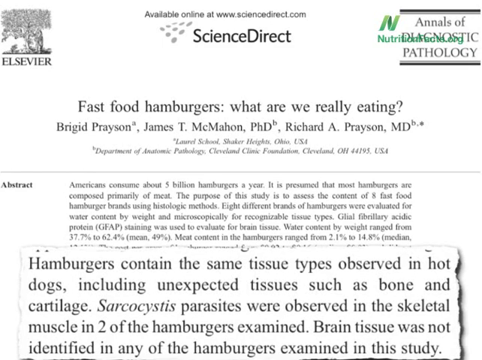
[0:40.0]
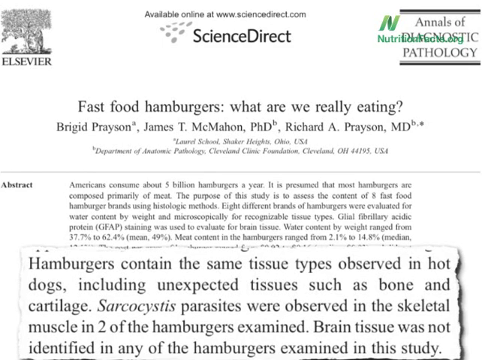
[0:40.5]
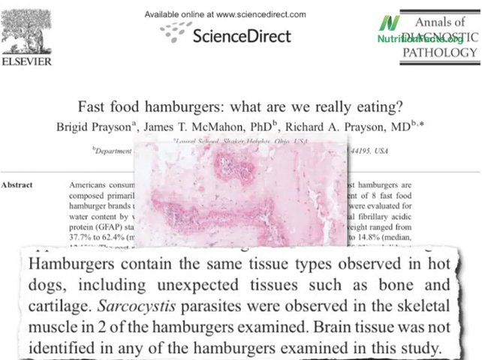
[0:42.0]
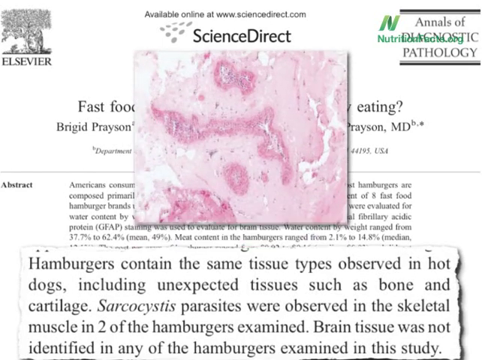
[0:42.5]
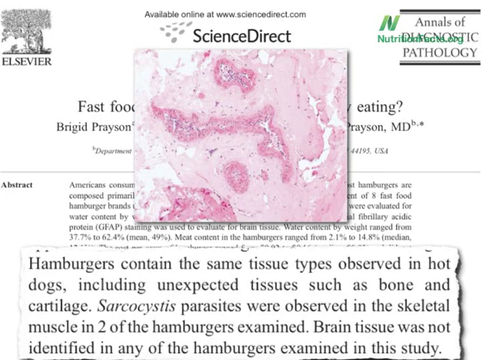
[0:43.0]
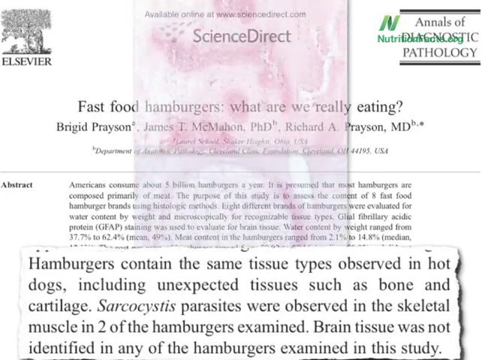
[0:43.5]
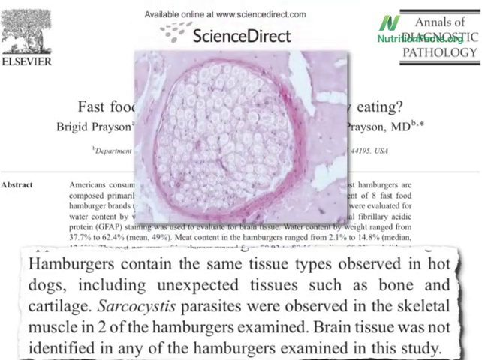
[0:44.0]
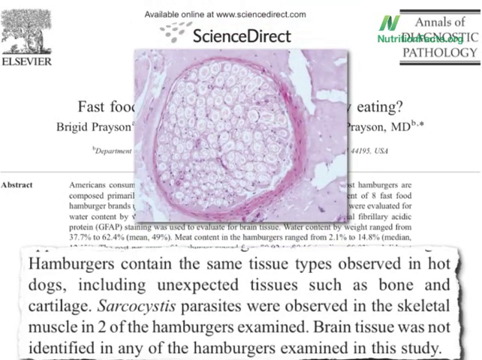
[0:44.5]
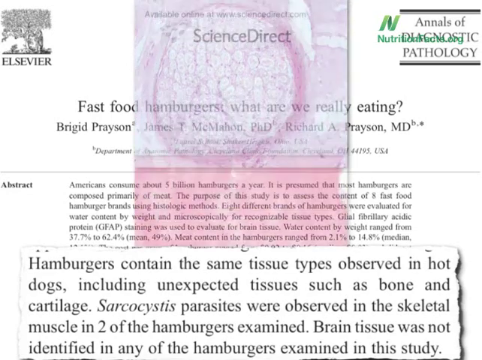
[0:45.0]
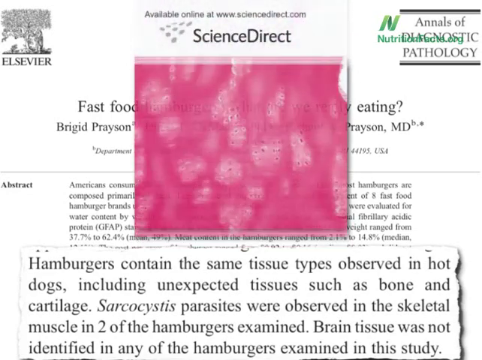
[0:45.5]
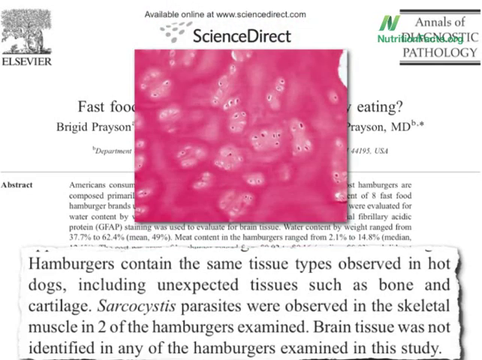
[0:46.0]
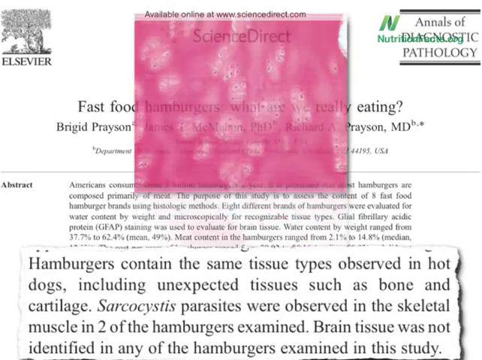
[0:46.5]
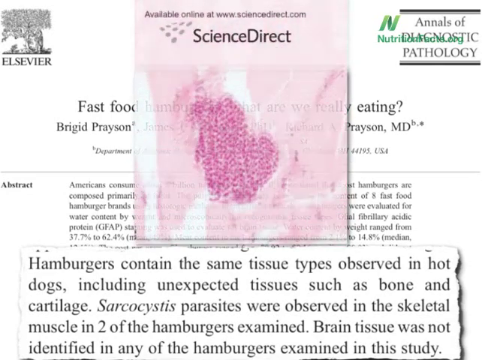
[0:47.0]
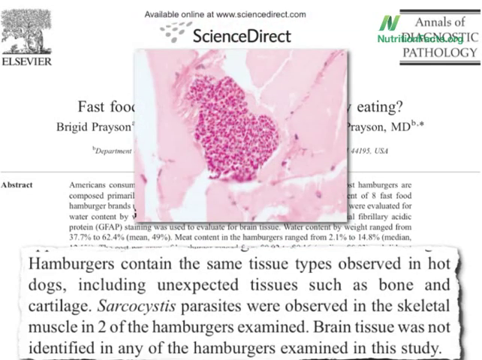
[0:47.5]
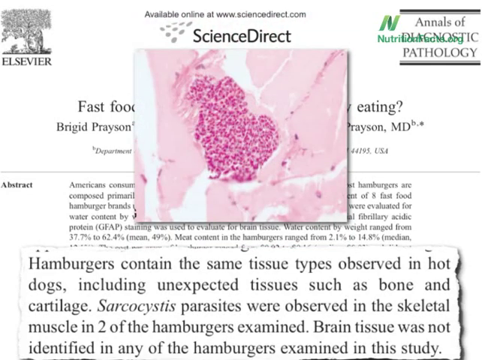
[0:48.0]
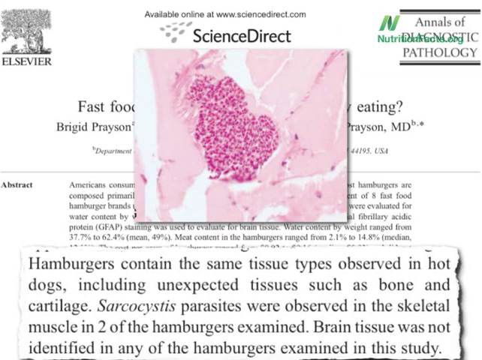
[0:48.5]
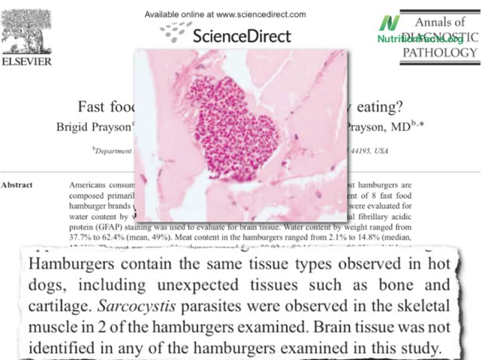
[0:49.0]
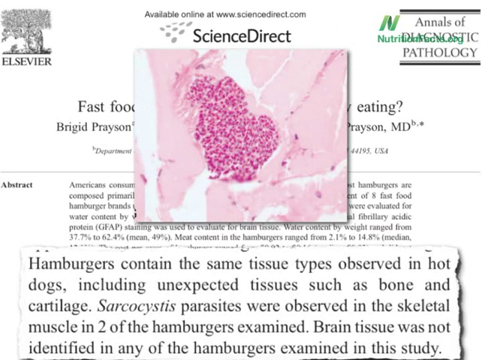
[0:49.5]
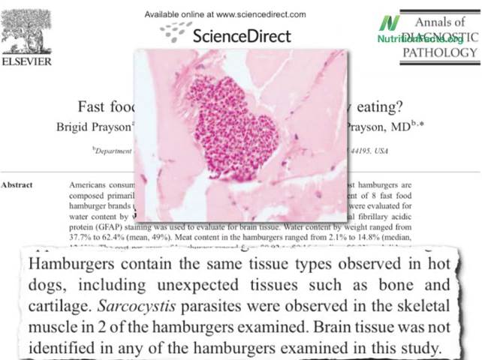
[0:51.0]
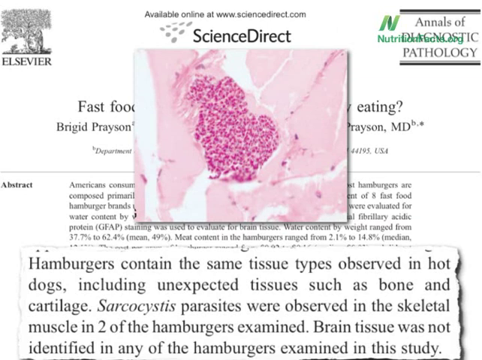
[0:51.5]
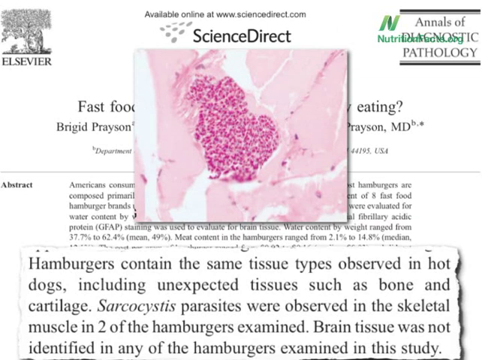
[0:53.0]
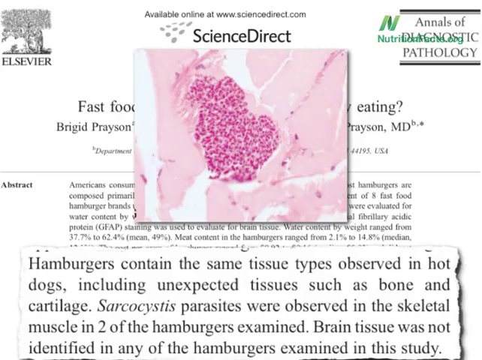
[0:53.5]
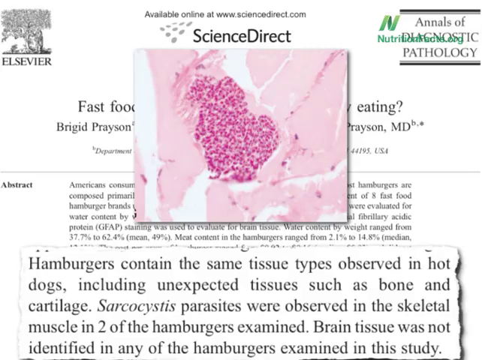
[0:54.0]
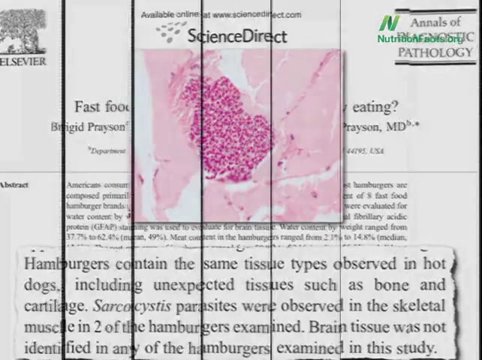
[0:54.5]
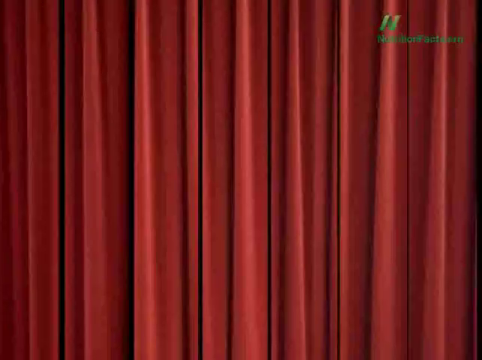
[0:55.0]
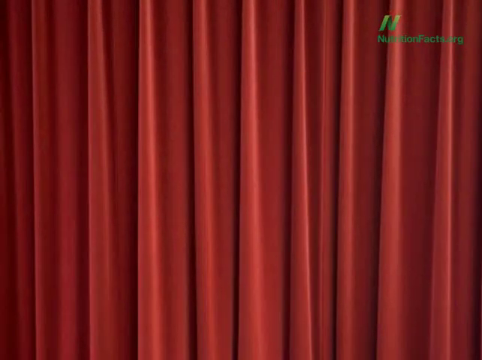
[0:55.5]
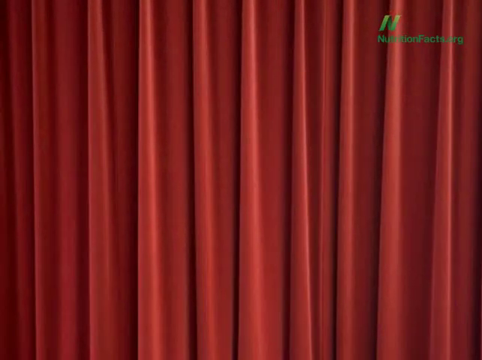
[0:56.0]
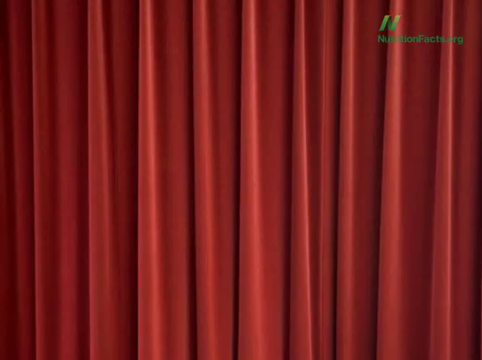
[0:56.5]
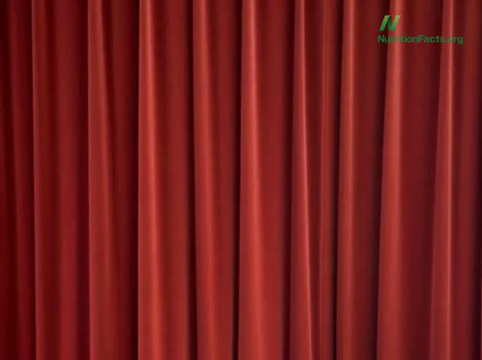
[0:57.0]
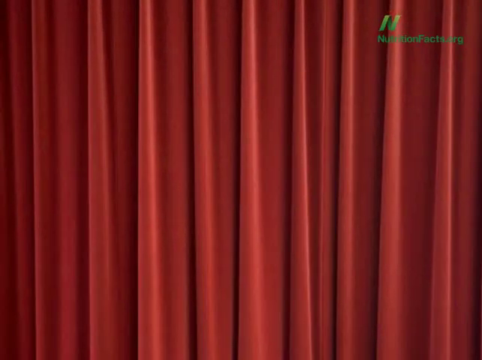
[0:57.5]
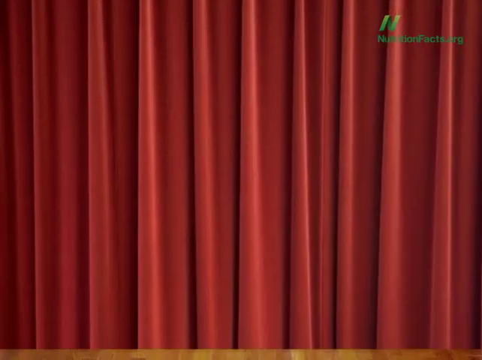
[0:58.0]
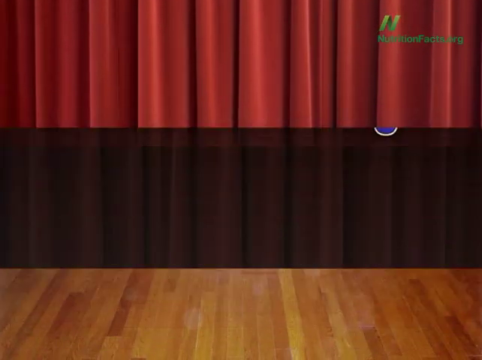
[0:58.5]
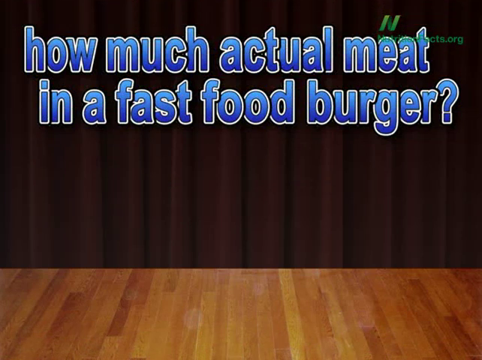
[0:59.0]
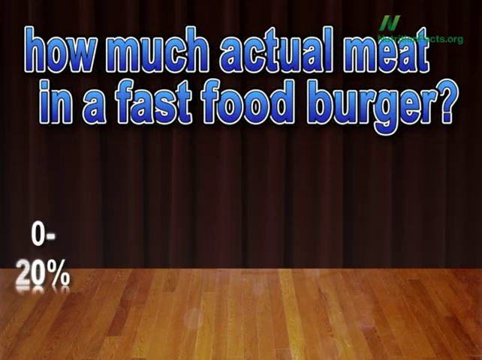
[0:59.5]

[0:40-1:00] The words "hamburgers contain the same tissue types observed in hot dogs, including unexpected tissues such as bone and cartilage. Sarcosystis parasites were observed in the skeletal muscle in two of the hamburgers examined. Brain tissue was not identified in any of the hamburgers examined in this study" are on screen. Several microscopic images of different tissues, pink and red in color, come onto the screen. After a transition effect, a red curtain covers the entire screen, similar to a curtain closed during a stage production. The words "how much actual meat in a fast-food hamburger" pop up across the screen in blue lettering. A few numbers, such as "0 to 20" and a percent sign, pop up before disappearing; the answer to the question is not shown. The nutritionfacts.org logo is in the upper right-hand corner, and the stage has a wooden floor.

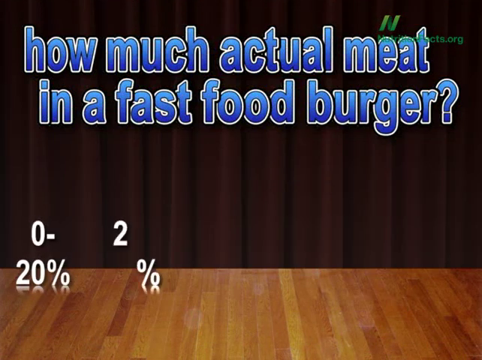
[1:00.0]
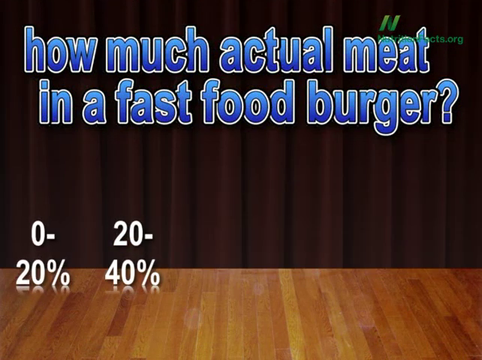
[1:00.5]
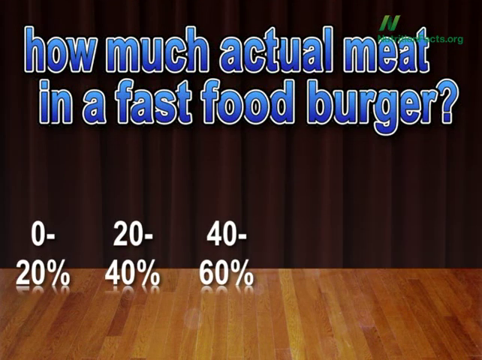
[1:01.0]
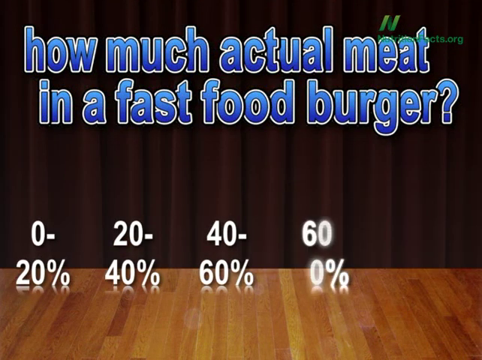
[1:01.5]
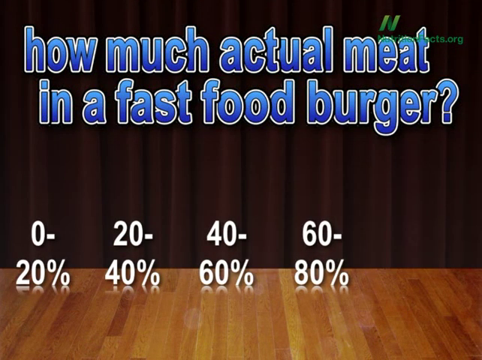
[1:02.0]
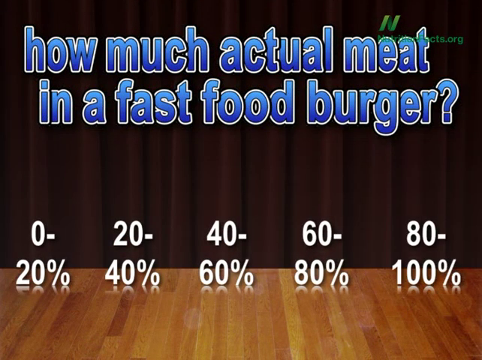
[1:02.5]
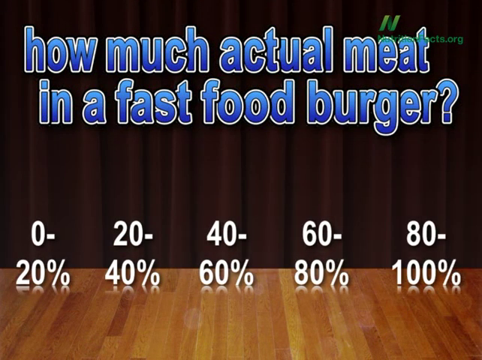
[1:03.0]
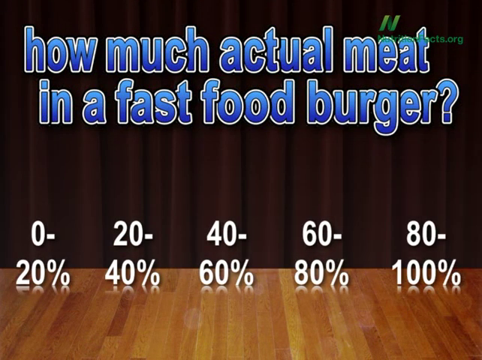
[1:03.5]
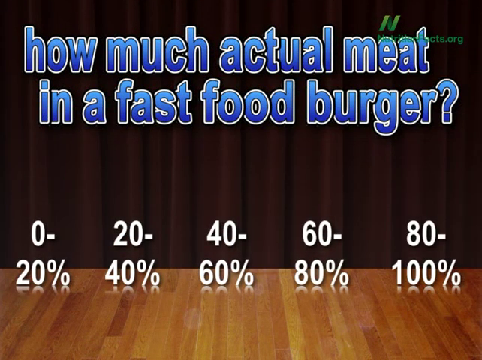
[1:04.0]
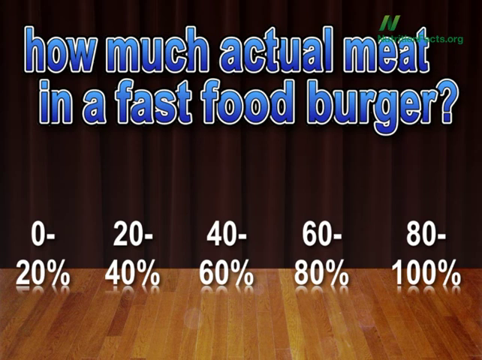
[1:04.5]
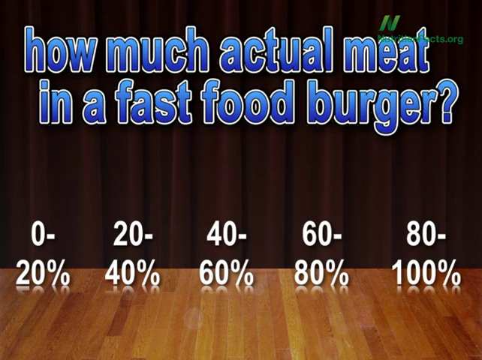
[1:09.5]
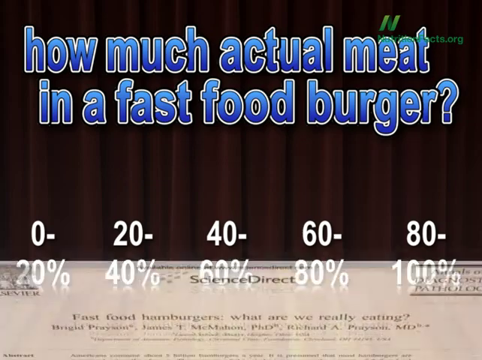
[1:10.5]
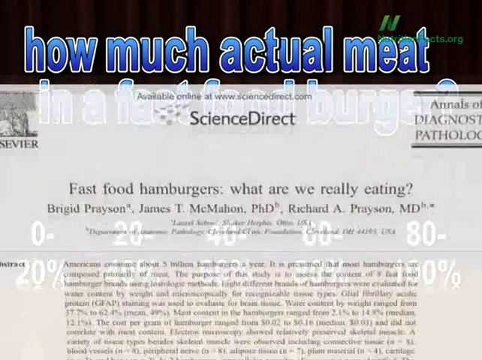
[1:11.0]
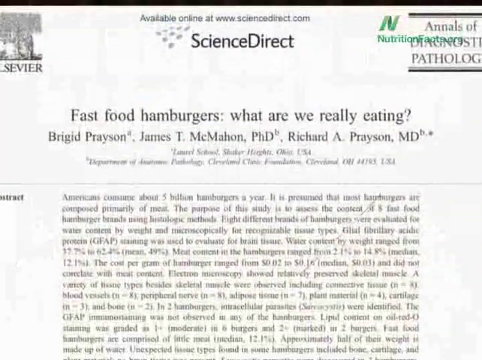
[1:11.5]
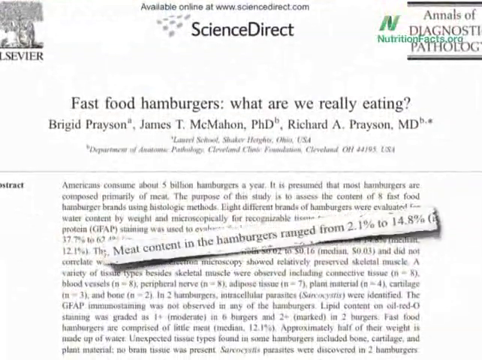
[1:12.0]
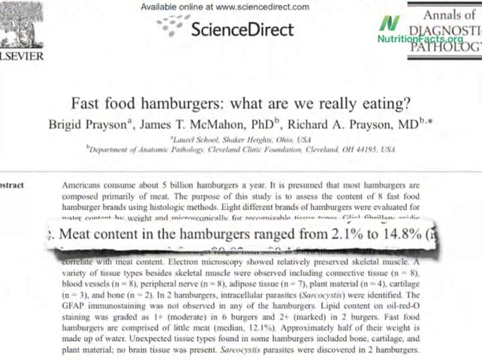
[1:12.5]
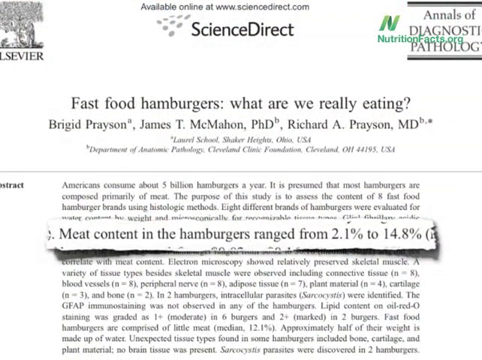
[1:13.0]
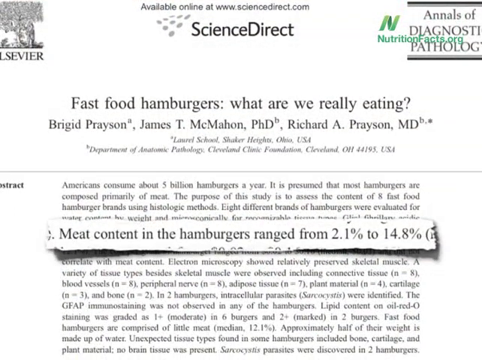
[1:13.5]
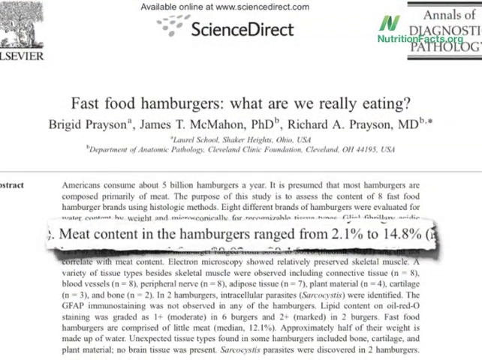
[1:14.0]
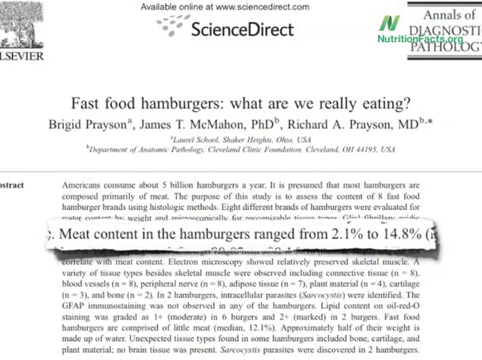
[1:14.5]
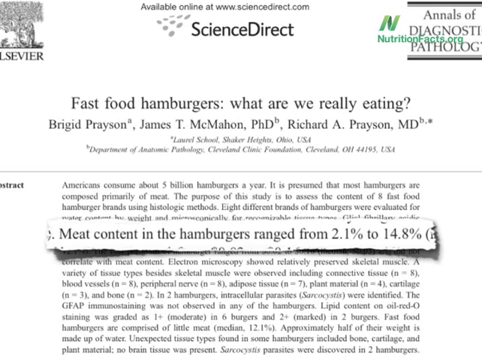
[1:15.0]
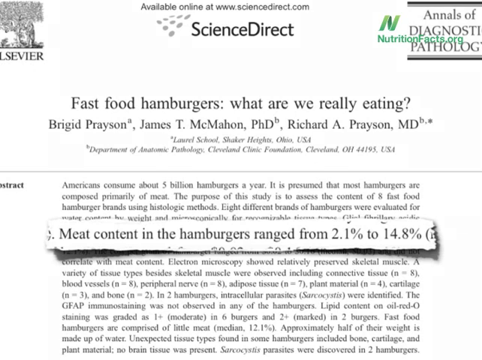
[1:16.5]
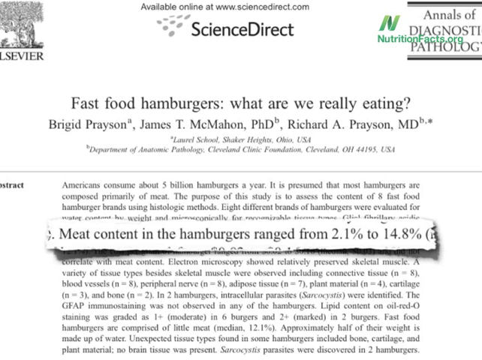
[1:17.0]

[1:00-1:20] The words "how much actual meat in a fast food hamburger" are across the top of the screen in large blue letters. Several sets of numbers appear: "0-20 percent," "20-40 percent," "40-60 percent," "60-80 percent" and "80-100 percent." The groups of numbers are sitting on the stage, which is shiny and gives a reflection effect. The curtains at the back of the stage are more of a brown color. The Science Direct article pops back onto the screen with the words "meat content in the hamburgers range from 2.1 percent to 14.8 percent," an excerpt from a much longer article, with the subtitle "fast food hamburgers, what are we really eating" shown at the top of the article. The nutritionfacts.org logo is in green in the upper right-hand corner.